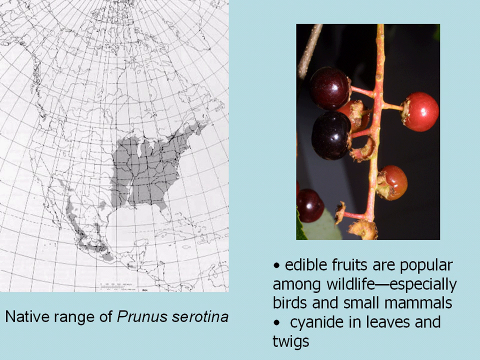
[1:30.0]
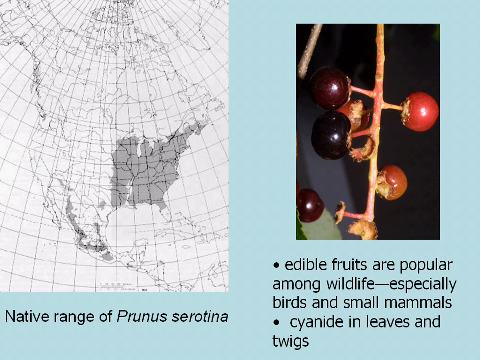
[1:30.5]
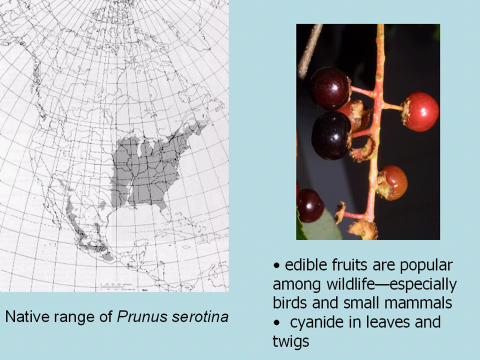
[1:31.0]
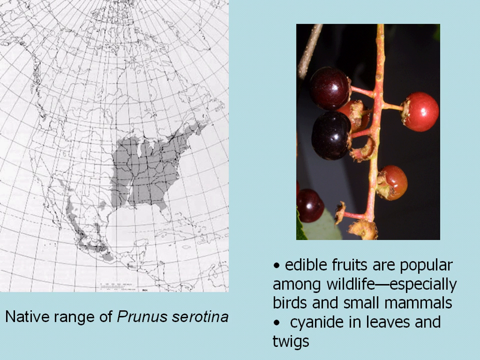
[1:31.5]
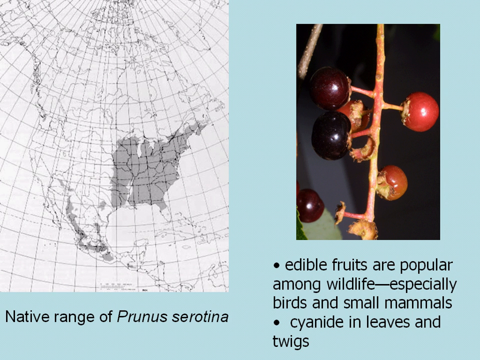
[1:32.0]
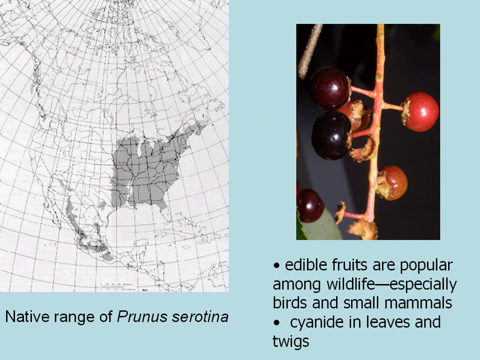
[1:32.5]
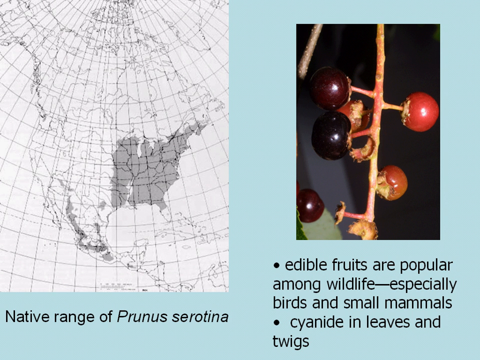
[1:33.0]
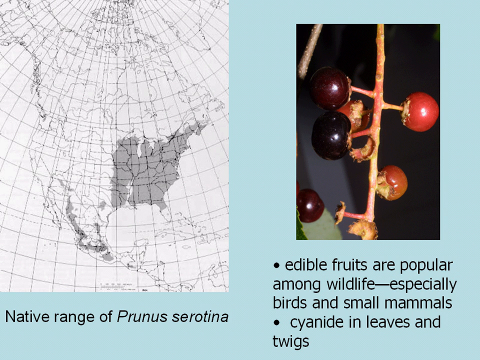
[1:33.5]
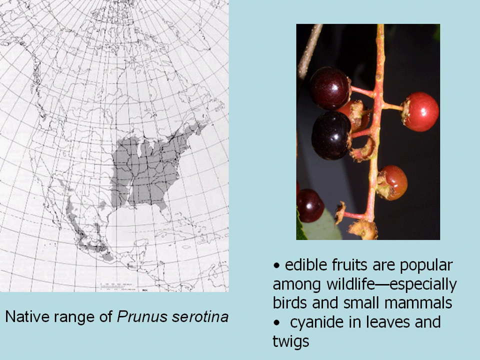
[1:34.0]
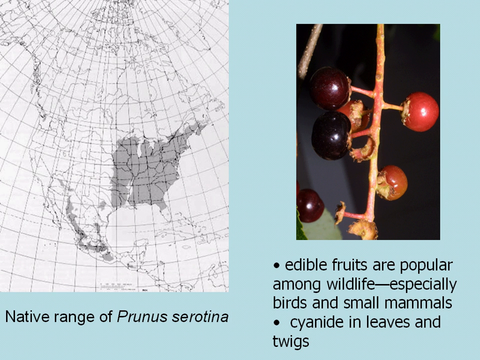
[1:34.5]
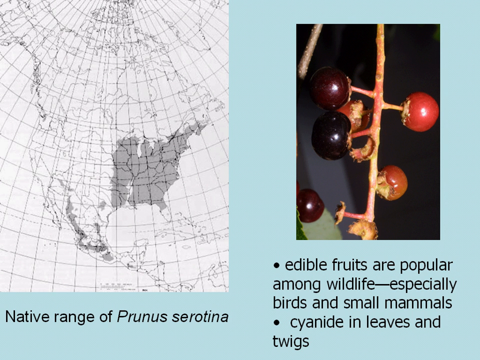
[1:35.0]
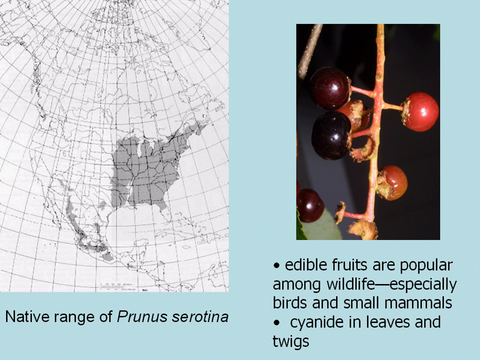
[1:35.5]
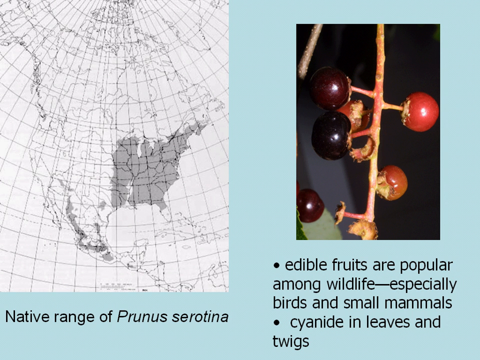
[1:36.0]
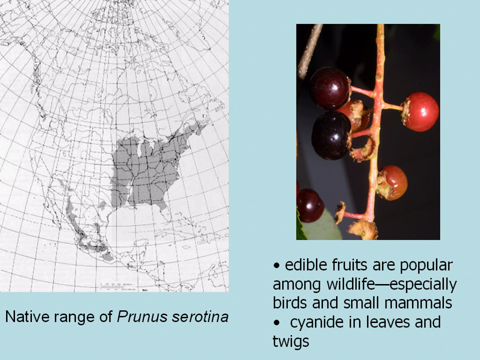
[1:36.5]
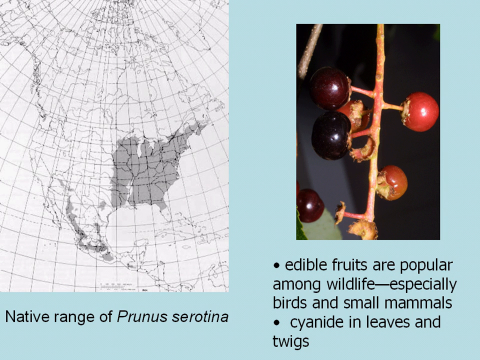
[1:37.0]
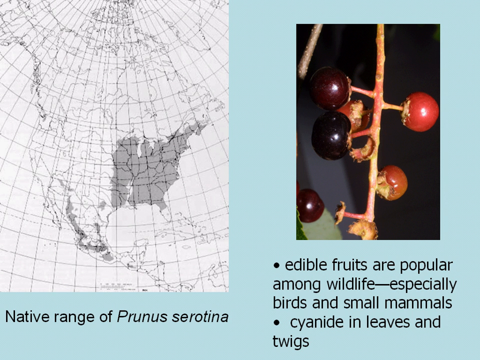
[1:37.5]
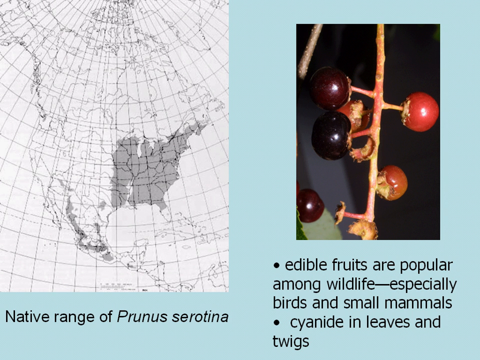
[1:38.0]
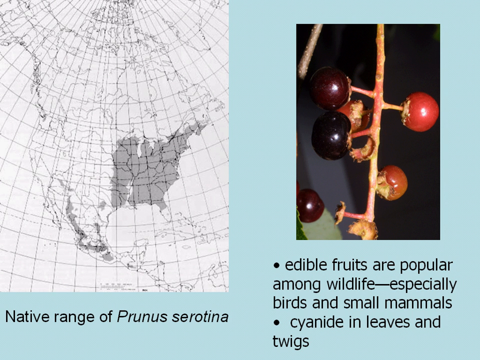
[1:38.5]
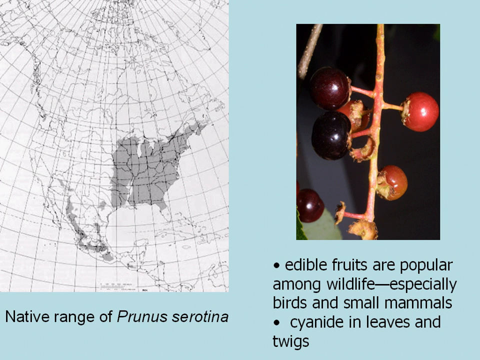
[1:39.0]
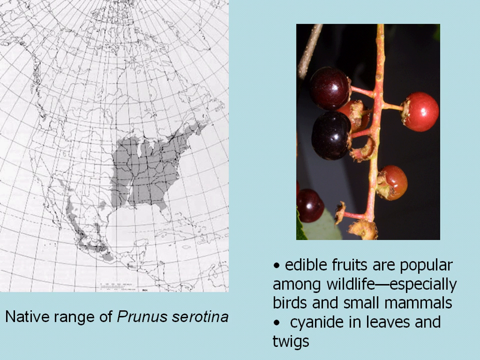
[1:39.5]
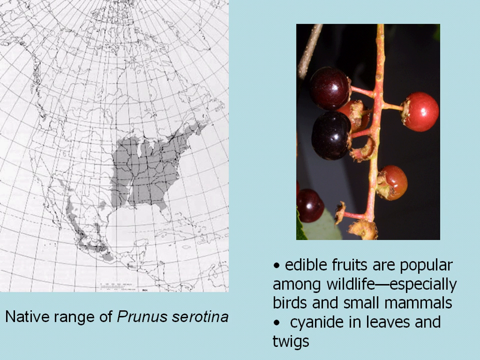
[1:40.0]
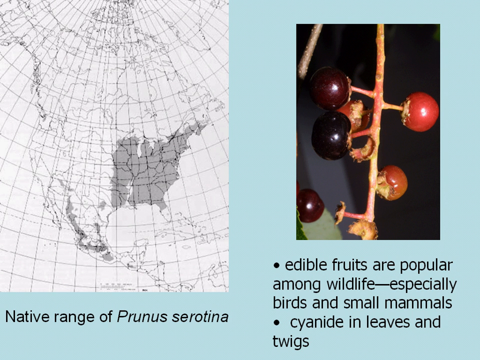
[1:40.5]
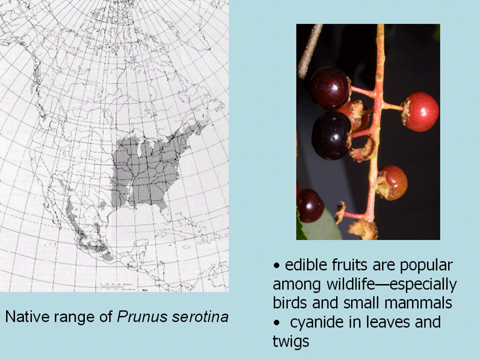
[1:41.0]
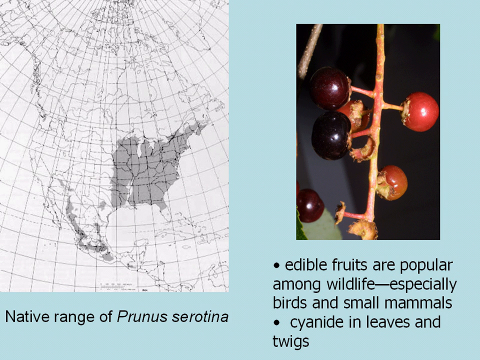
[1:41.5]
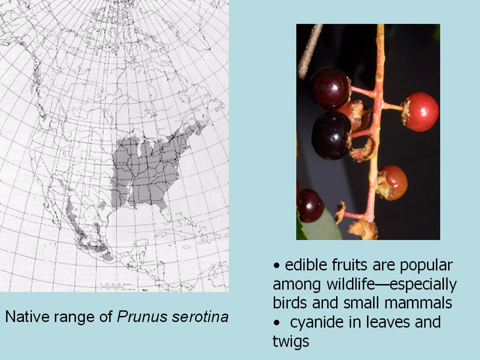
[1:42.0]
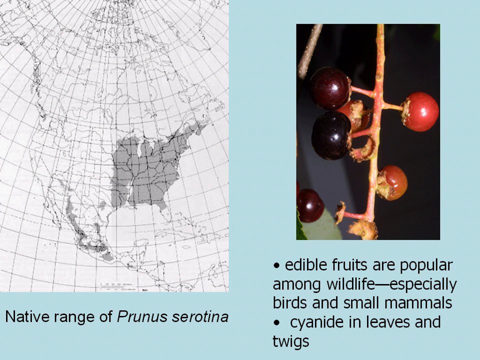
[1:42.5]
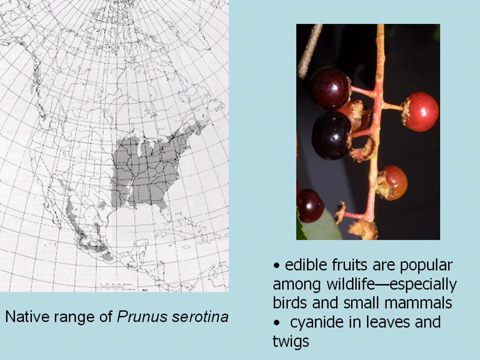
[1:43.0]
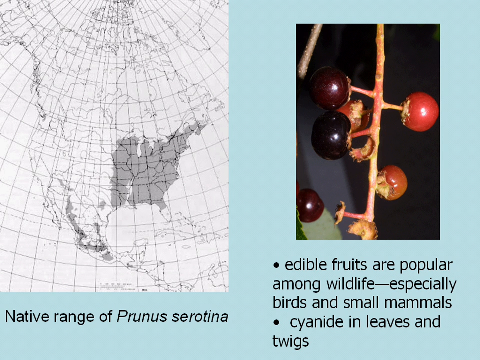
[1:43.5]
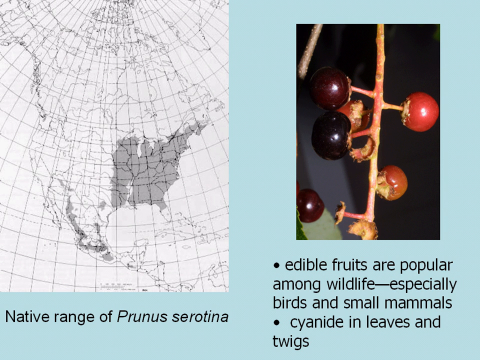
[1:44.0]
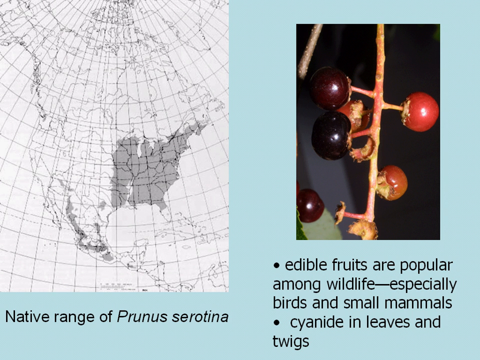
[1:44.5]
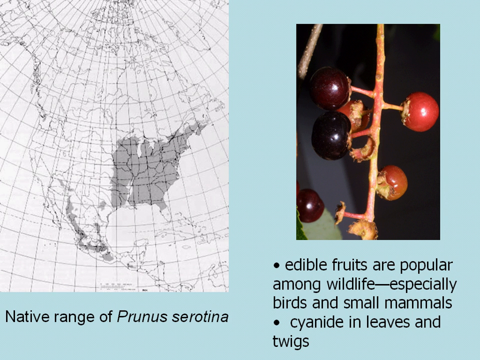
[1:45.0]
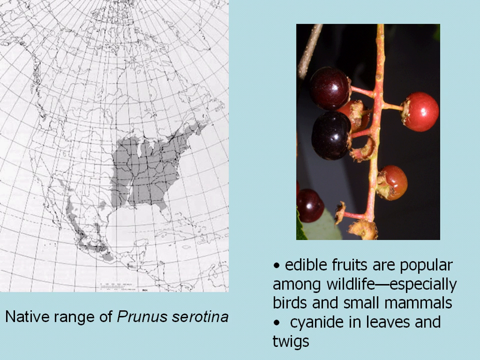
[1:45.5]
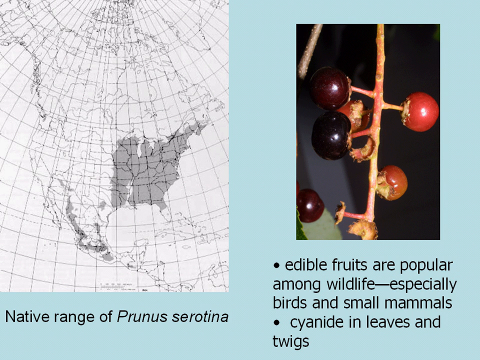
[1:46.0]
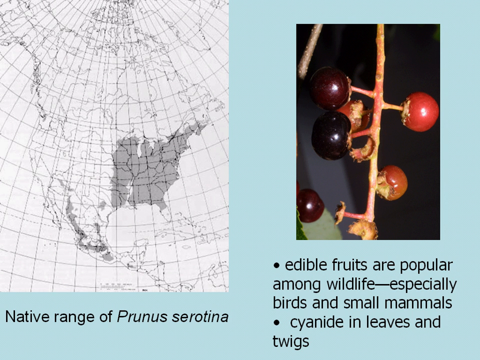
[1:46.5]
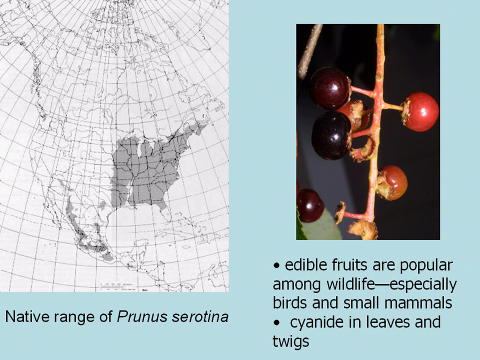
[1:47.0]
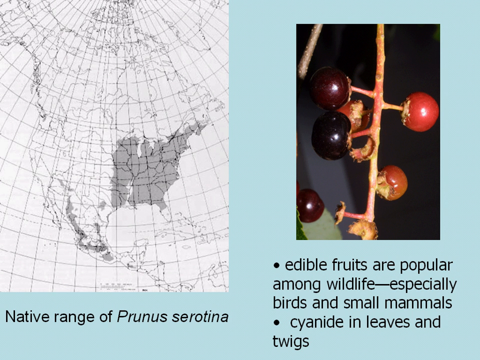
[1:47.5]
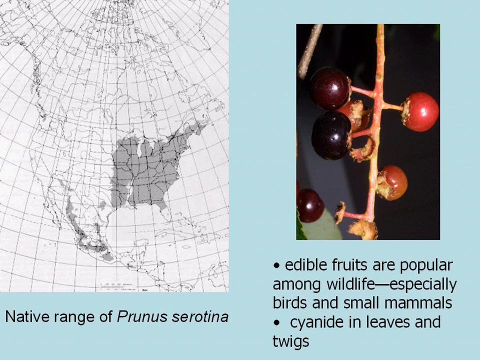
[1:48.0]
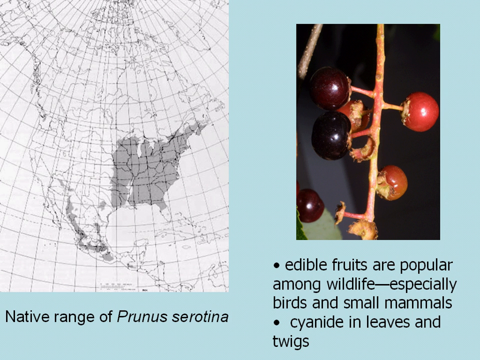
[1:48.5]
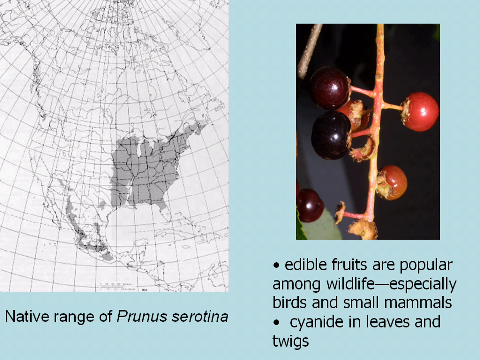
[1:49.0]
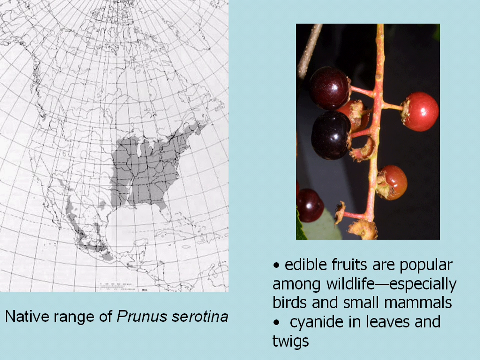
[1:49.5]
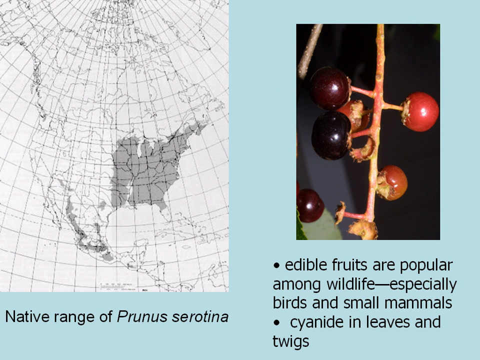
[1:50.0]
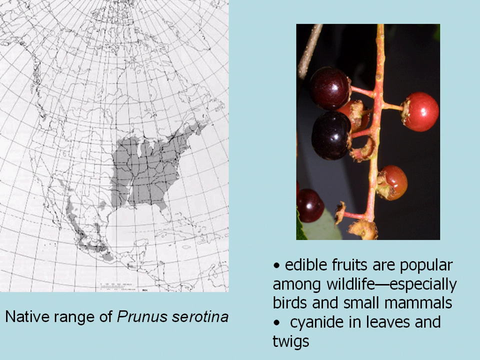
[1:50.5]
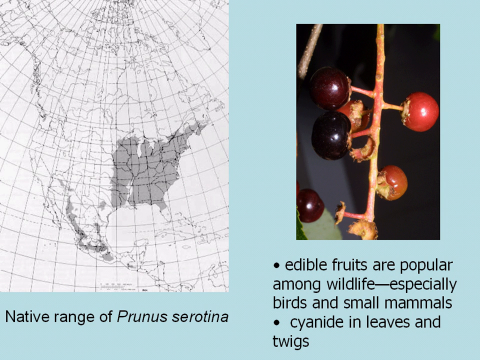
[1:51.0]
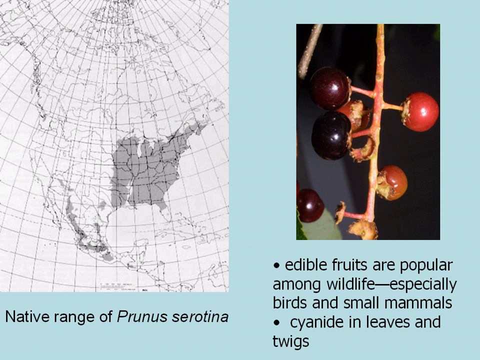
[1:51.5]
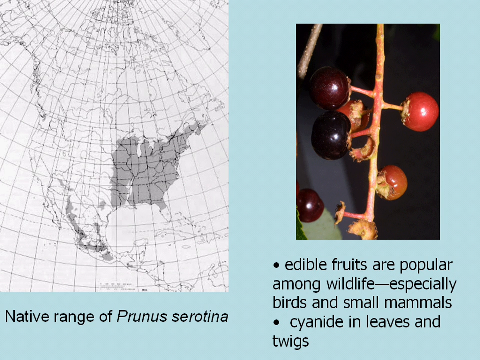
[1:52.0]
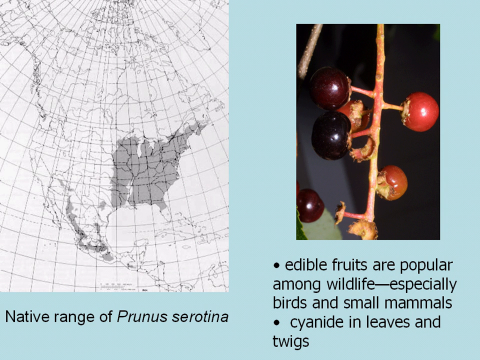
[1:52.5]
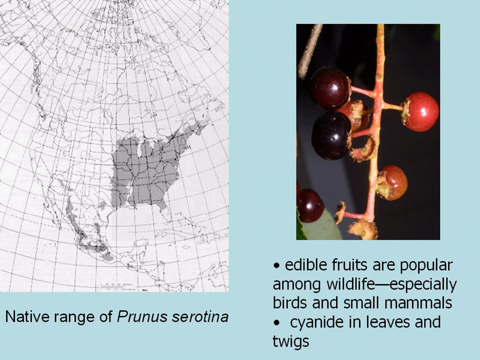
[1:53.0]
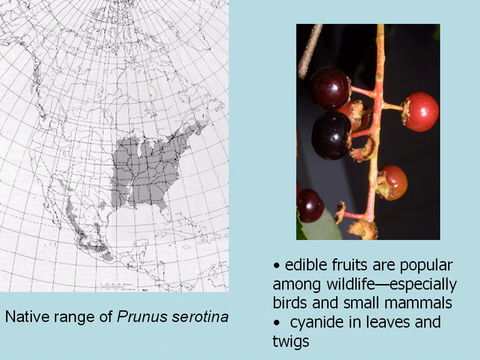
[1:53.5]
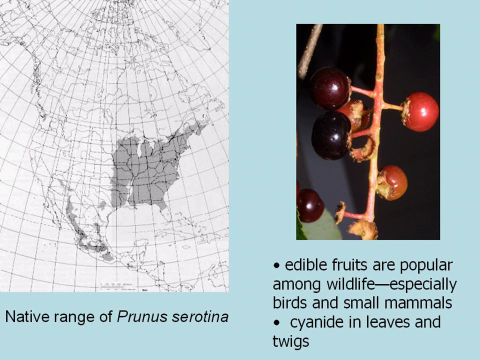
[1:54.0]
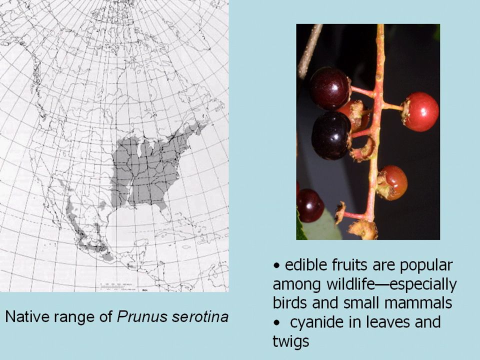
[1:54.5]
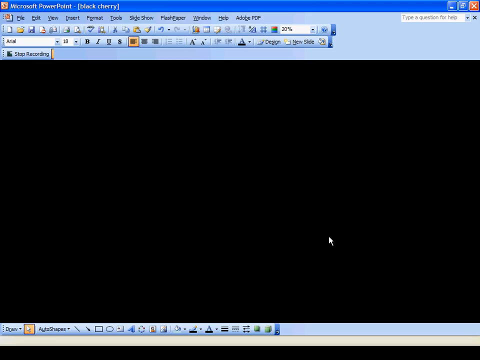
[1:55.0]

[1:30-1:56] The atlas and the edible fruits are still on screen, and nothing moves. Then the screen switches to a black screen which, at the top, seems to be from an open laptop, with something like tabs or sub-tabs. It appears to be a Word app open with a document that is about to load.